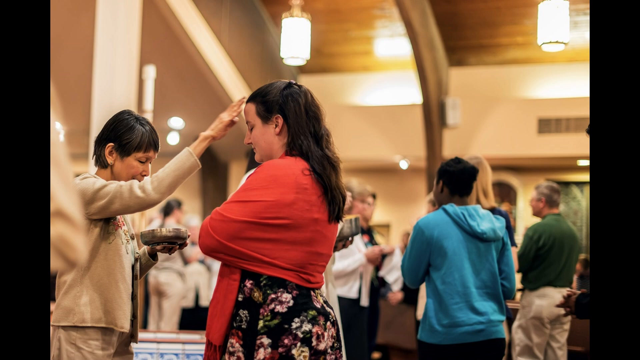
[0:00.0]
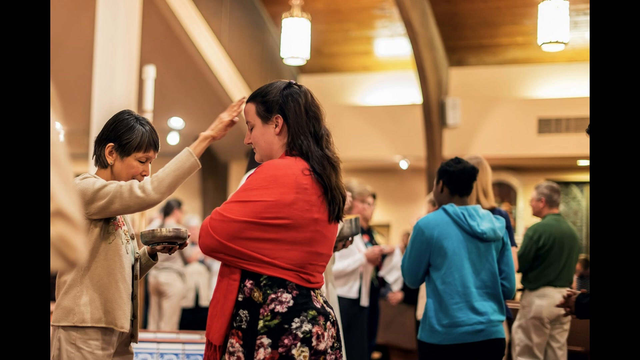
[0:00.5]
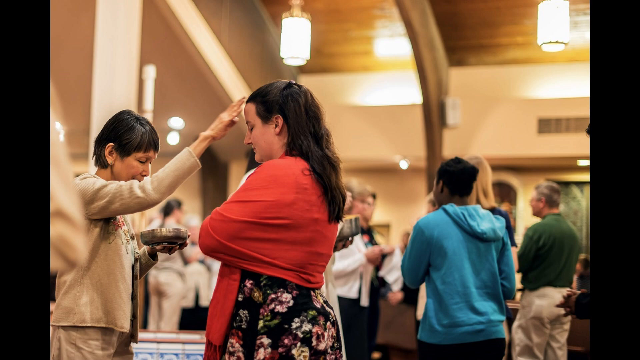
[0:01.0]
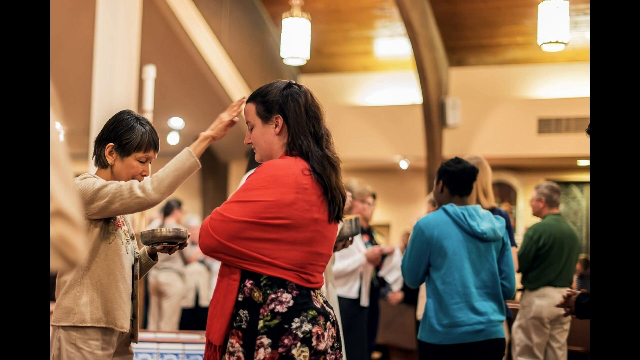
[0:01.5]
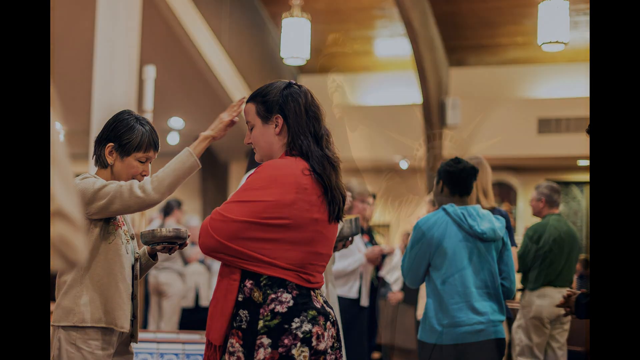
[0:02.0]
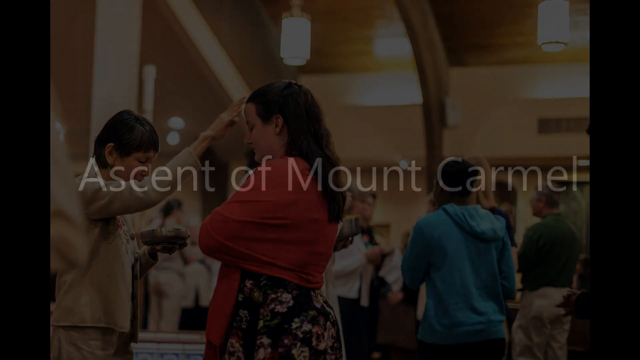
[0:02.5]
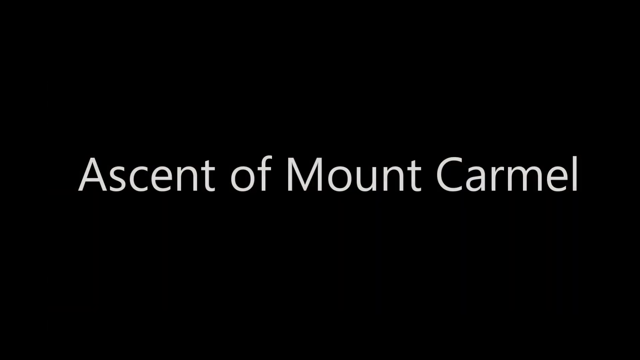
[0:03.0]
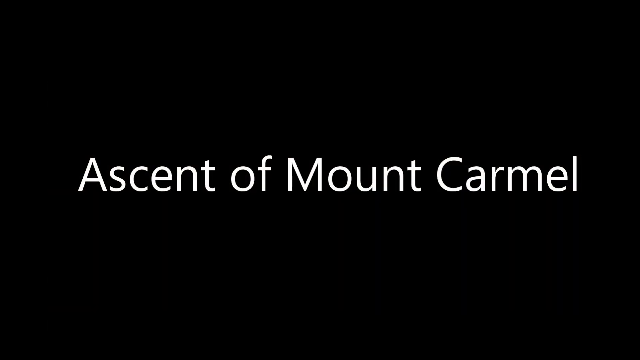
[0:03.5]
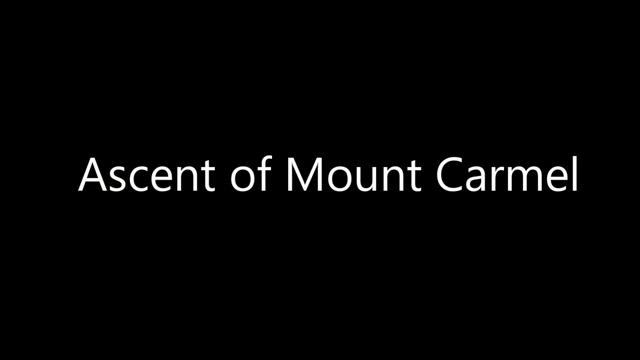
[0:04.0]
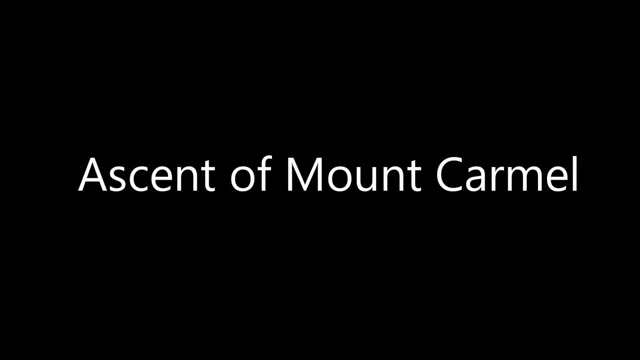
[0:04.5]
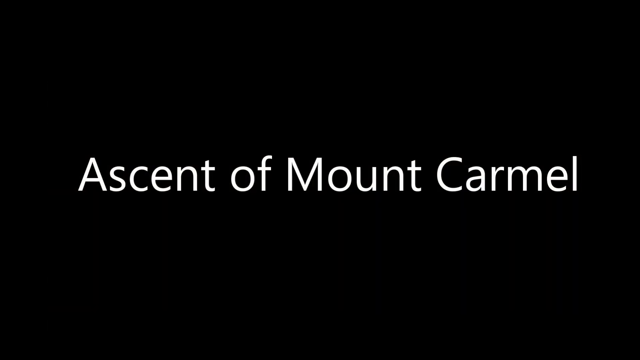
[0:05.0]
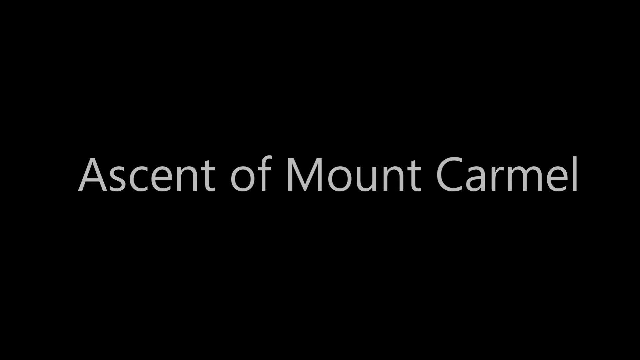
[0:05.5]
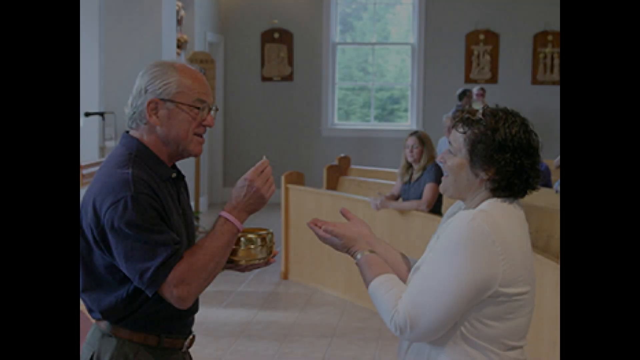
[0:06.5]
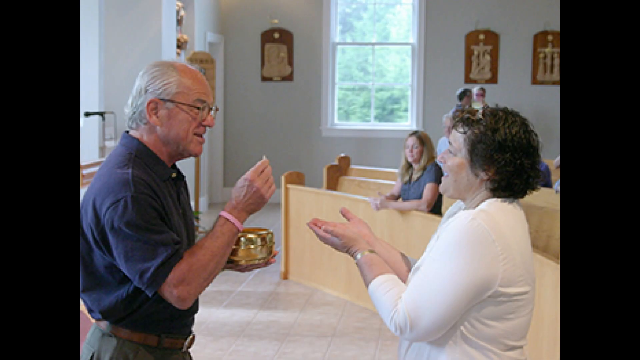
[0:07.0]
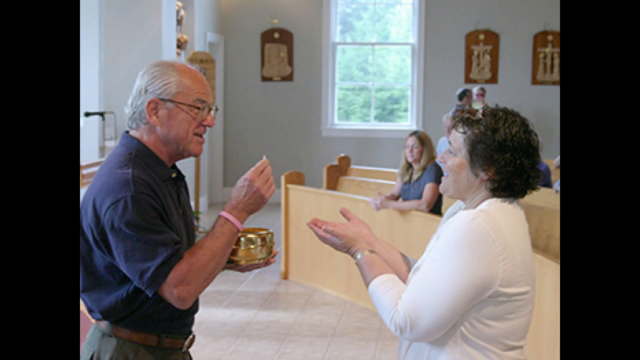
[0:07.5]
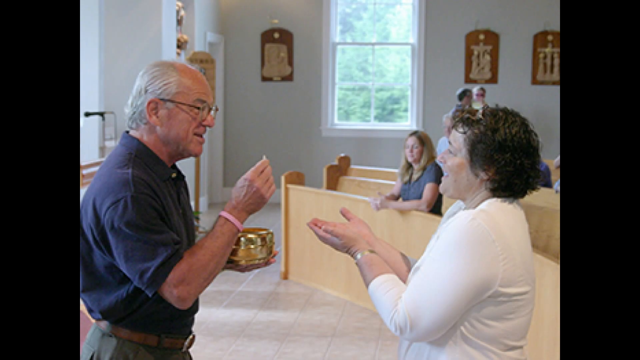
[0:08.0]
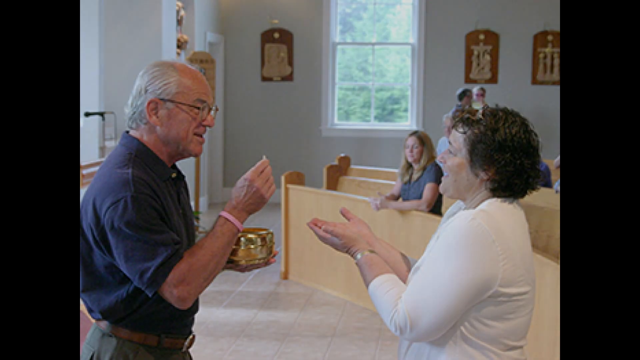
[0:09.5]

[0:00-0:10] People appear to possibly be in a church. An older lady stands in front of a younger girl. The older lady holds something that looks like a ball, and she seems to be sort of blessing the younger lady, her hand apparently on the younger lady's forehead. The younger lady wears a black dress with floral patterns and something like a red scarf around her arms, and she has long brunette hair. The older lady wears pants and a brown jacket with florals on it. Other people are in the background, while these two ladies are in the foreground. Text then appears reading "Ascent of Mount Carmel" and stays on screen. Next, an older man who looks like he may be in his 80s, wearing glasses, takes something out of a gold dish and hands it to a lady who holds her hands out. She wears an almost long-sleeved white shirt and has short brown hair. What he gives her is unclear; it looks like a small white piece of something.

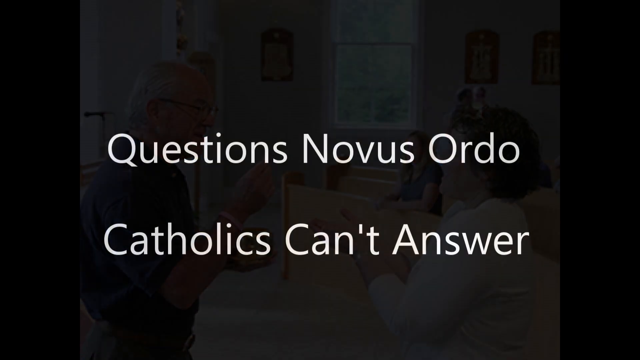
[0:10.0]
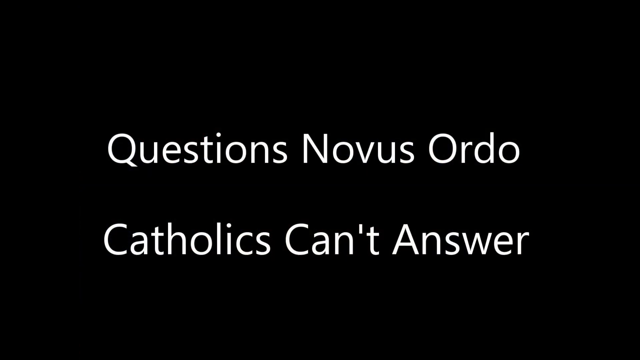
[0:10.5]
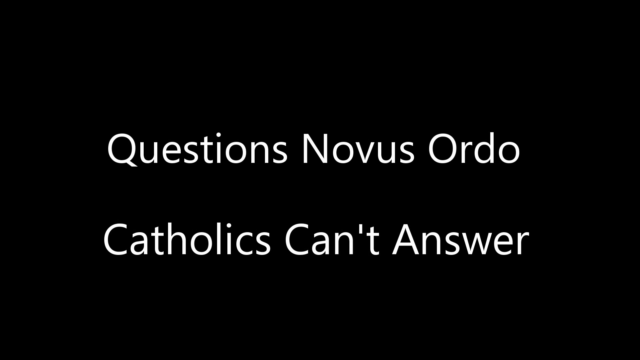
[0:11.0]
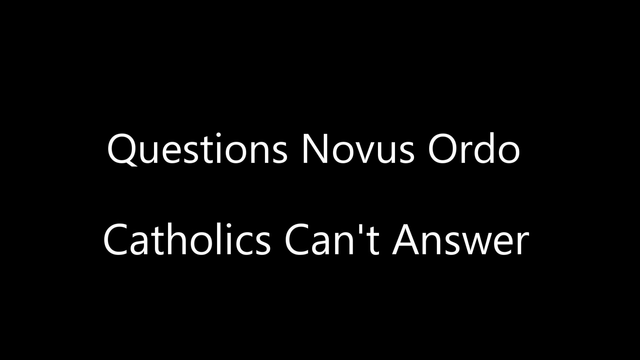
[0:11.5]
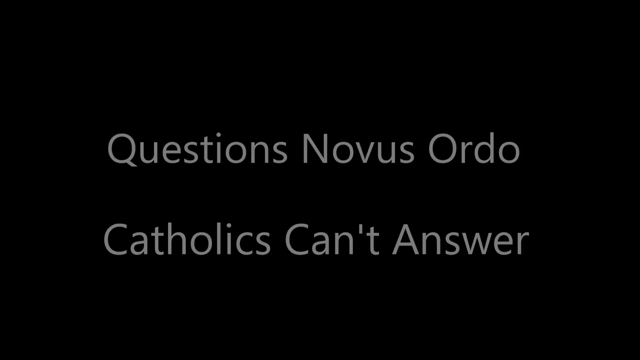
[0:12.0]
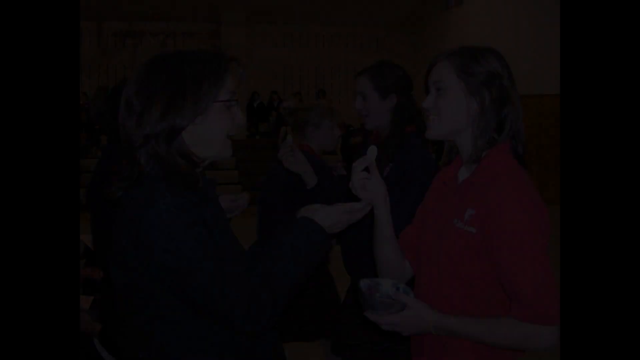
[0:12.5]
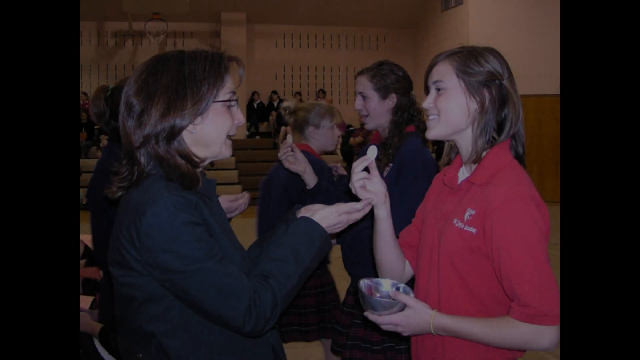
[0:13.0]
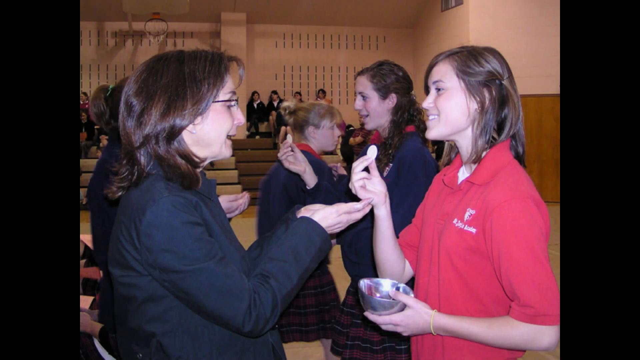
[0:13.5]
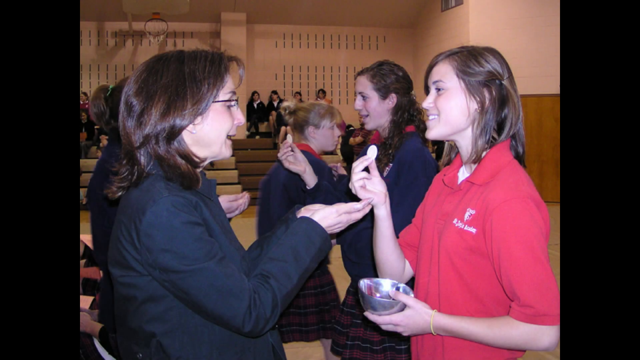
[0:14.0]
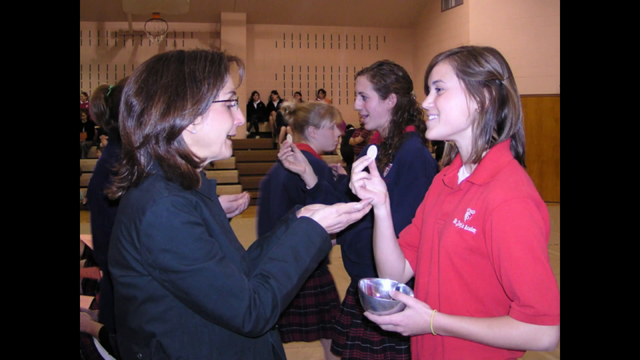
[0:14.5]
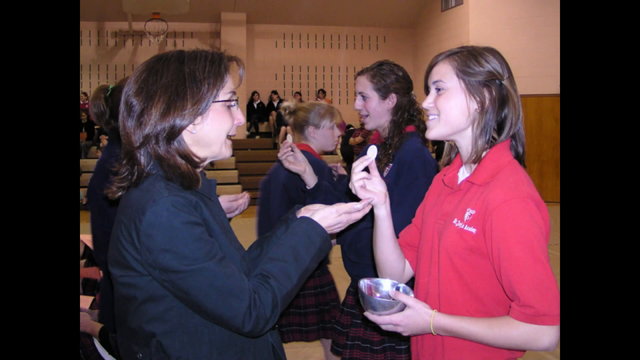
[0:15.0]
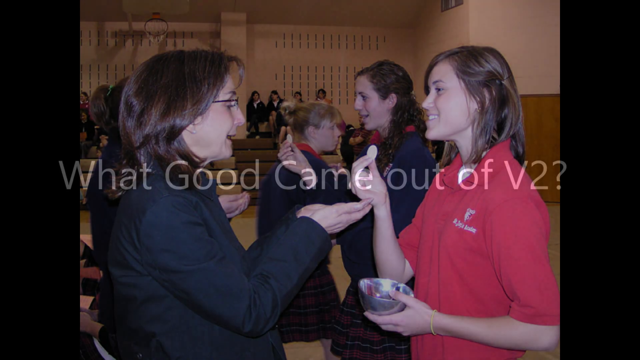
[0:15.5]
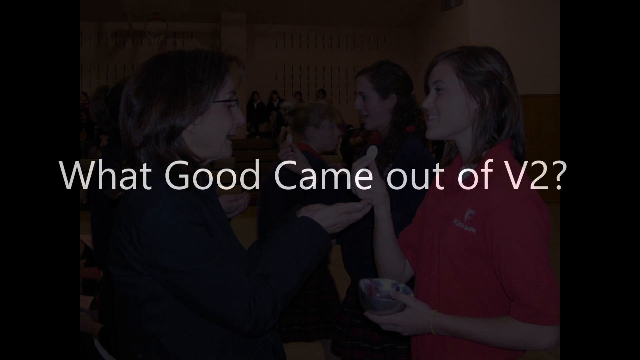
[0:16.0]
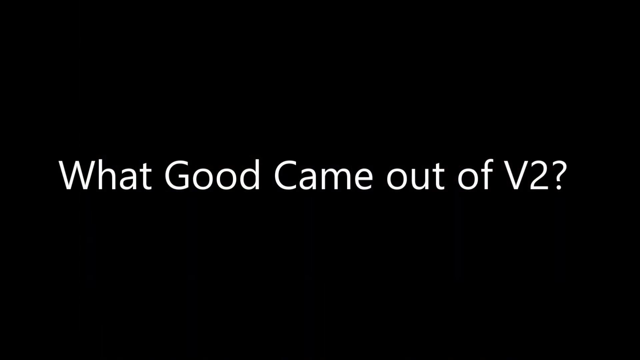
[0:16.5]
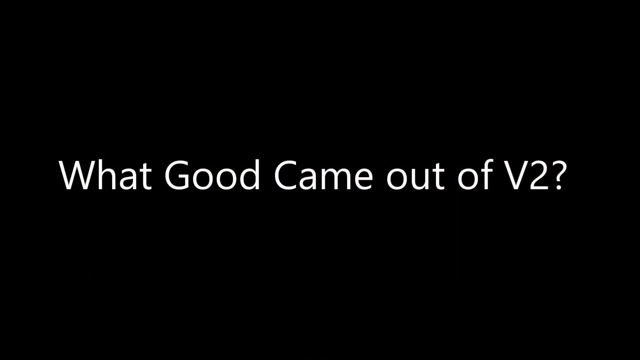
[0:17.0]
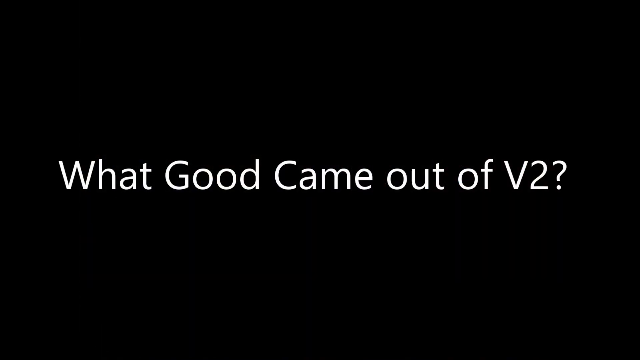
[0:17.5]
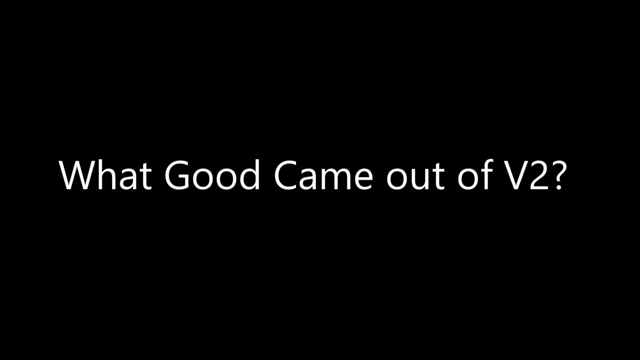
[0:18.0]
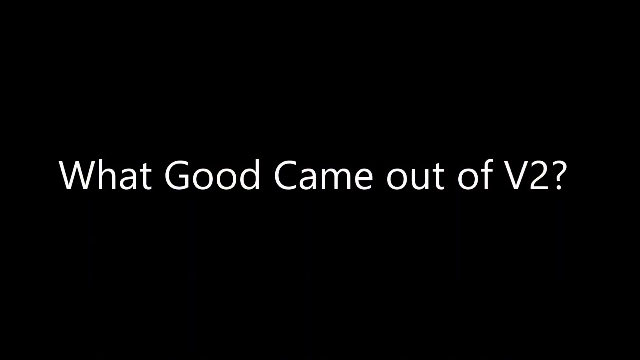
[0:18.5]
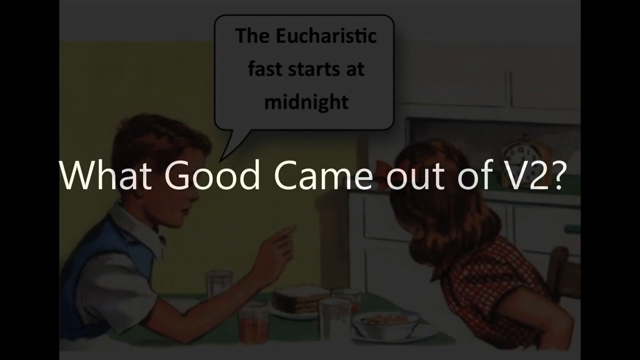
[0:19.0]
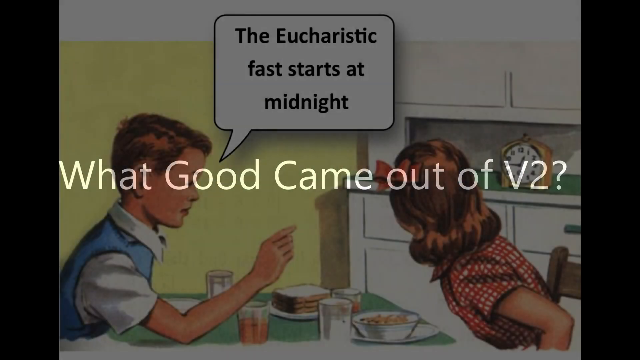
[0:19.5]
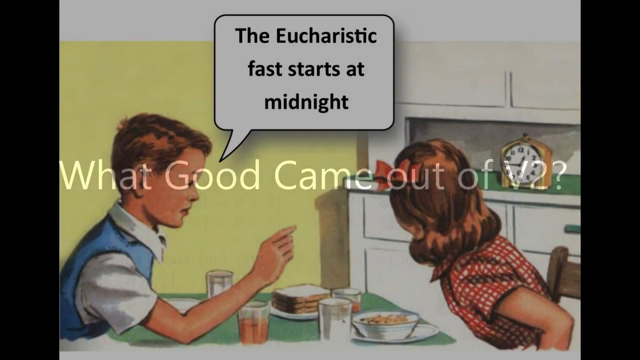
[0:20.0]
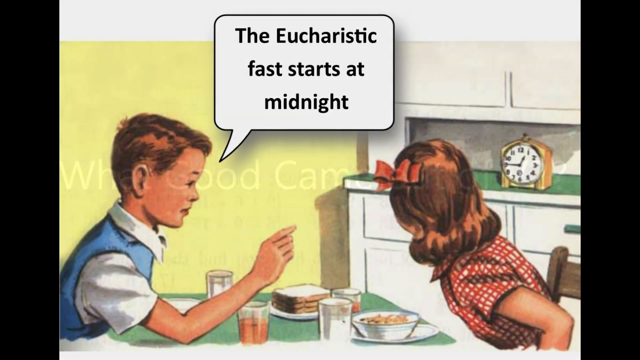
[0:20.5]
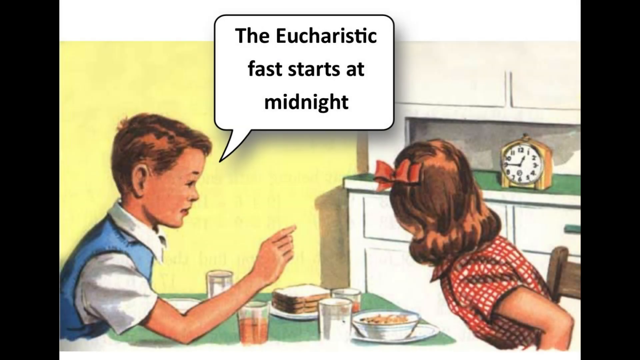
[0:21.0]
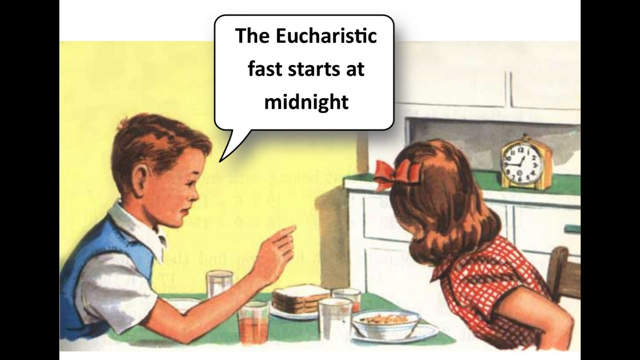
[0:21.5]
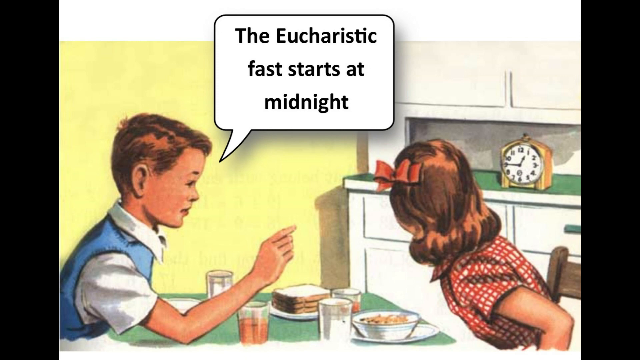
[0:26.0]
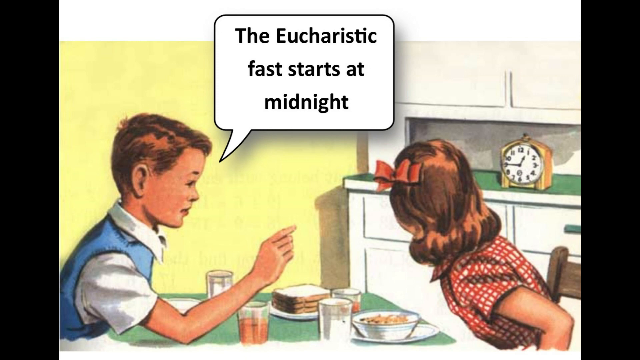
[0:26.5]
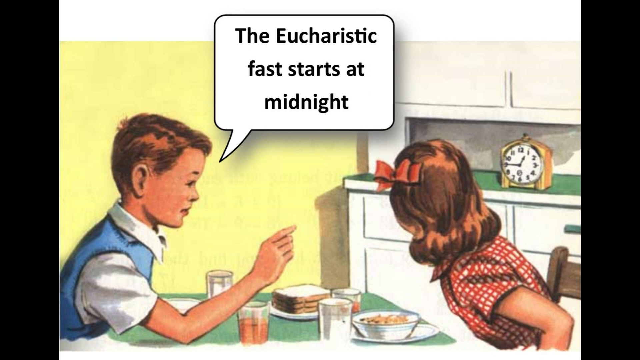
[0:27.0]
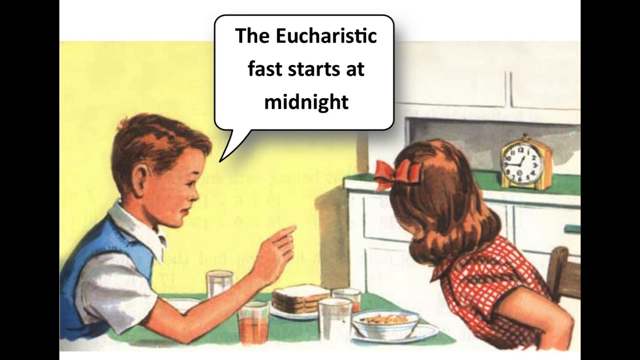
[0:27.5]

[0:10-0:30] Text comes up on the screen reading "question novice order catholics can't answer". A picture then shows a group of young ladies, some younger and some older, handing each other a little white piece of mint. Of the two ladies sort of at the front, one wears a red shirt with a collar and hands the piece of white mint, as it appears, to another lady who looks older, wears glasses and a black jacket, and holds her hands out. Behind them, another lady with long brunette hair down past her shoulders, wearing a jacket, hands the same kind of piece of mint to another lady. In the background are bleachers with young ladies sort of watching, dressed in what look like uniforms of jackets and skirts, apparently watching a ceremony.